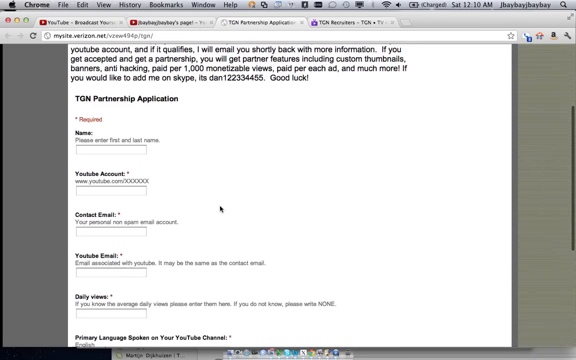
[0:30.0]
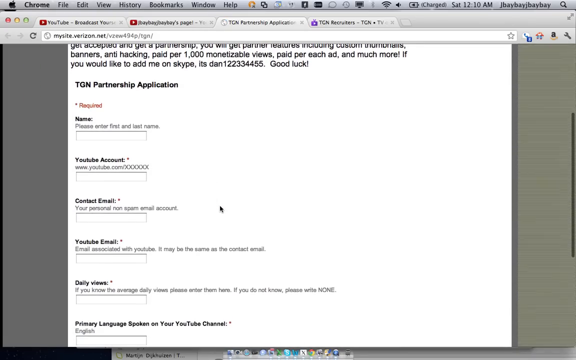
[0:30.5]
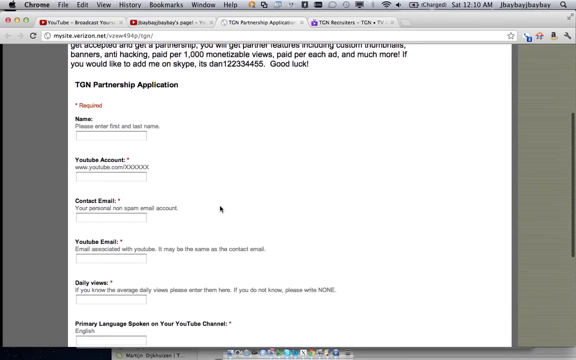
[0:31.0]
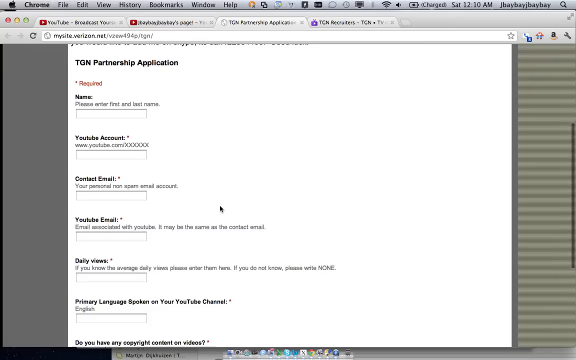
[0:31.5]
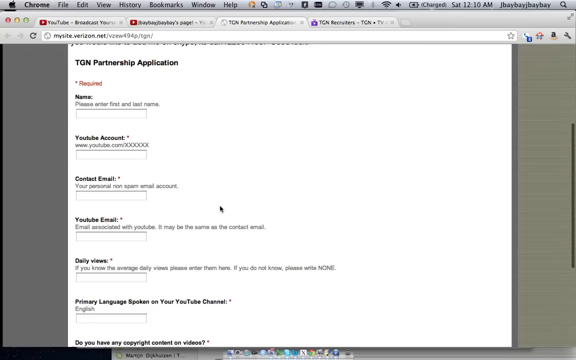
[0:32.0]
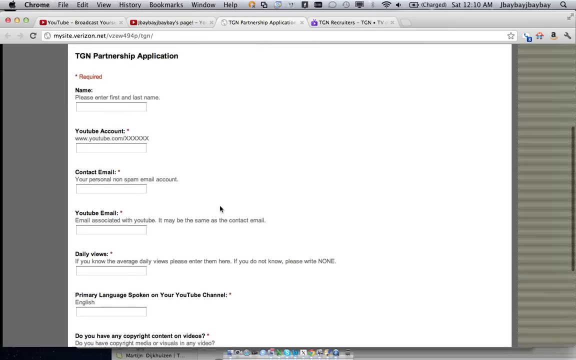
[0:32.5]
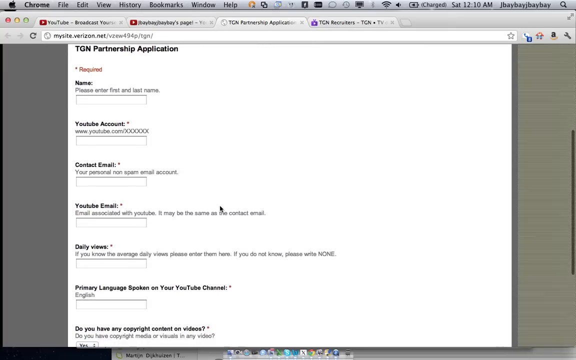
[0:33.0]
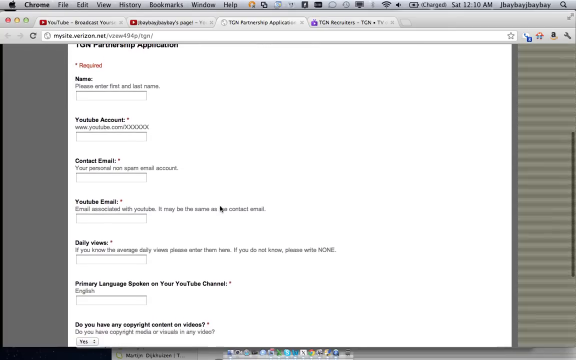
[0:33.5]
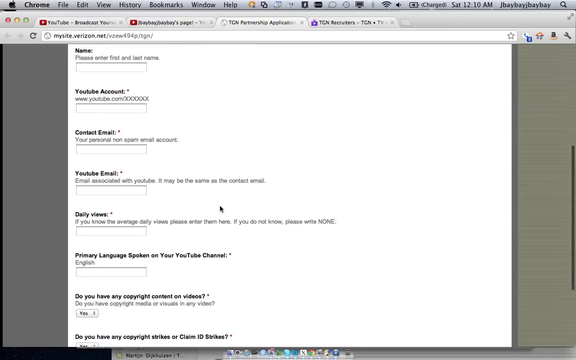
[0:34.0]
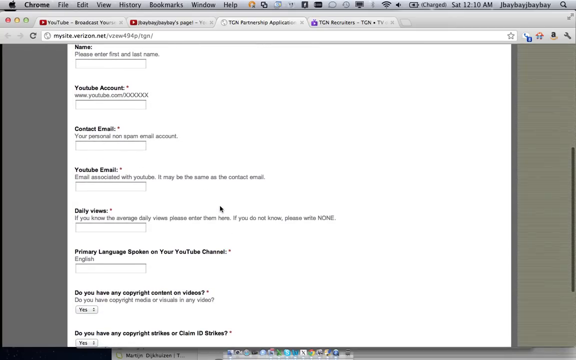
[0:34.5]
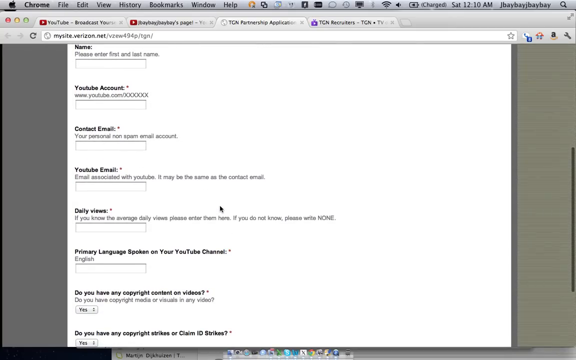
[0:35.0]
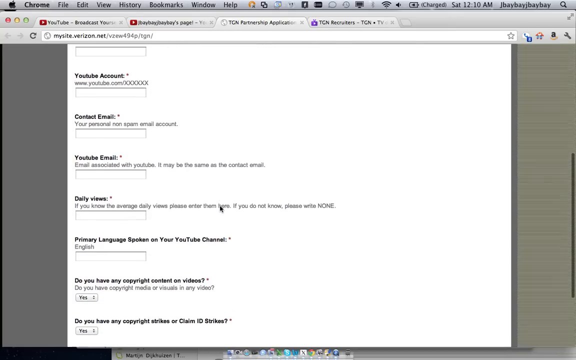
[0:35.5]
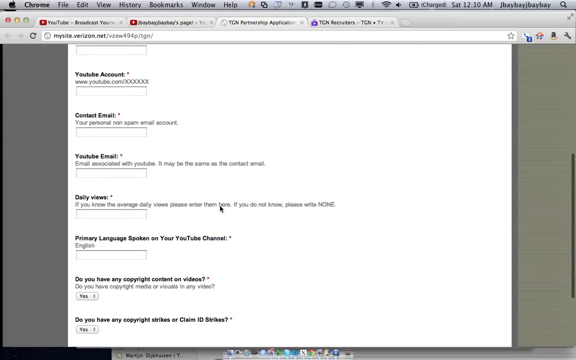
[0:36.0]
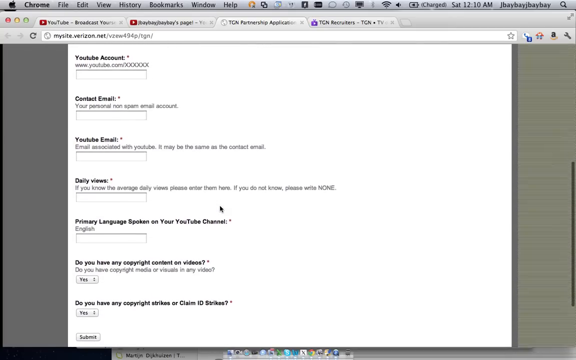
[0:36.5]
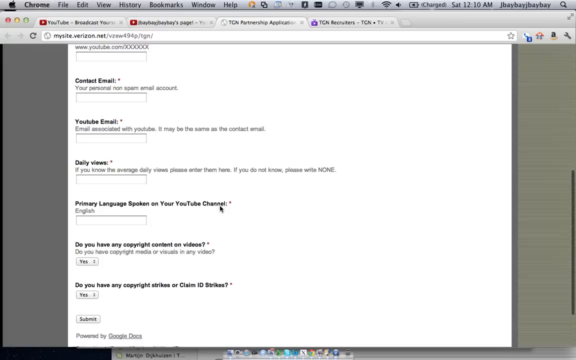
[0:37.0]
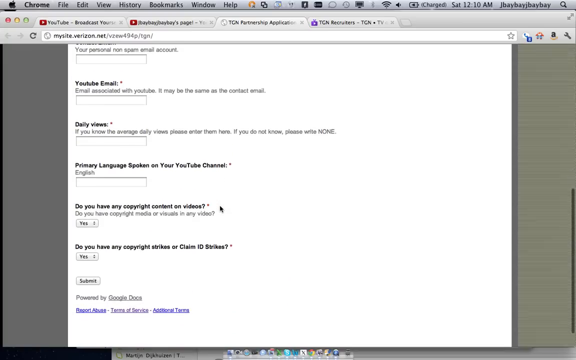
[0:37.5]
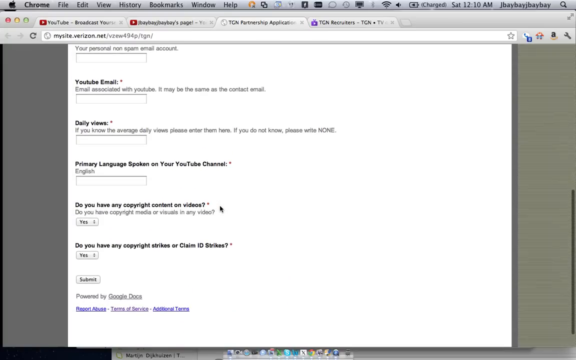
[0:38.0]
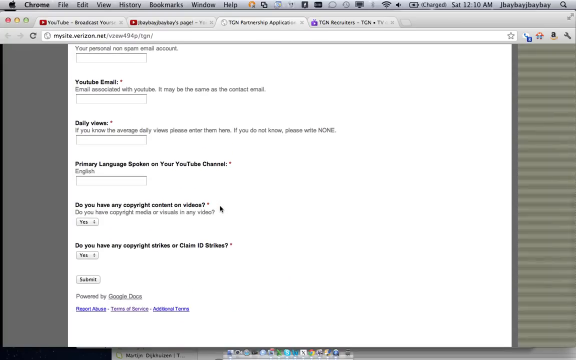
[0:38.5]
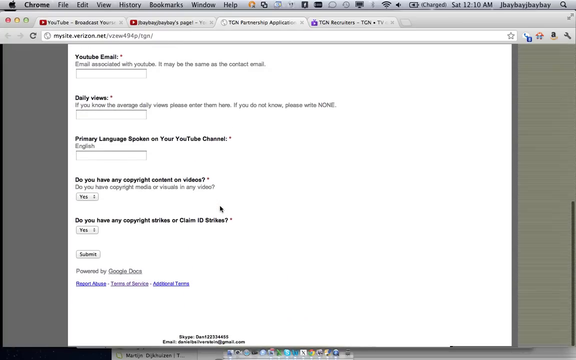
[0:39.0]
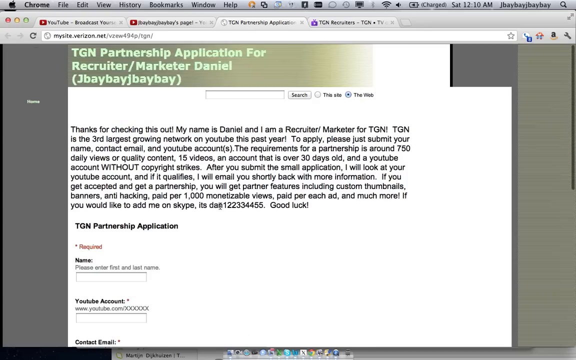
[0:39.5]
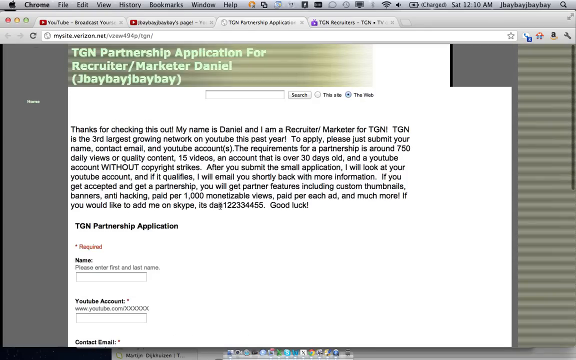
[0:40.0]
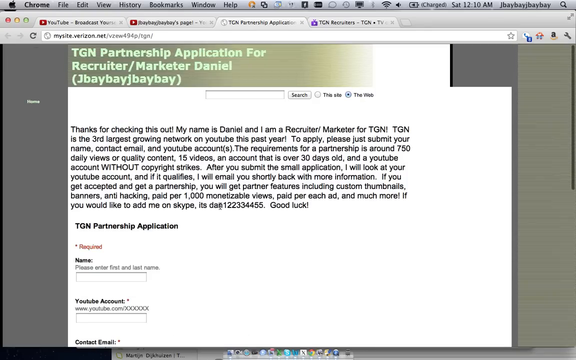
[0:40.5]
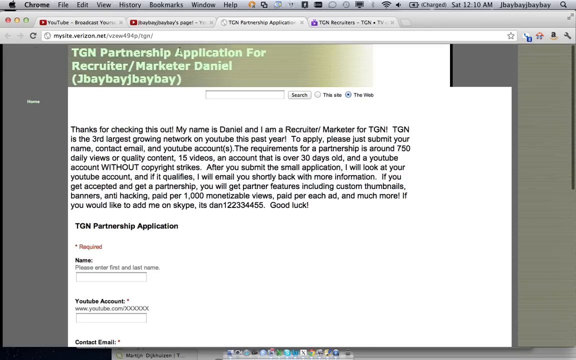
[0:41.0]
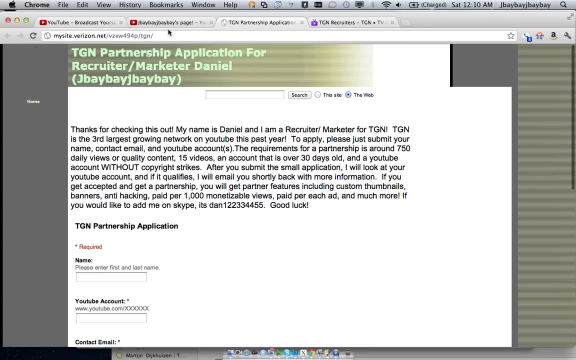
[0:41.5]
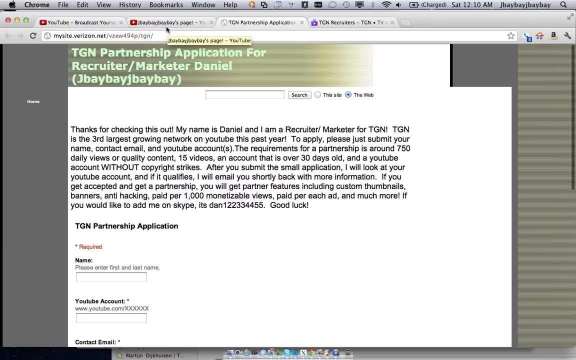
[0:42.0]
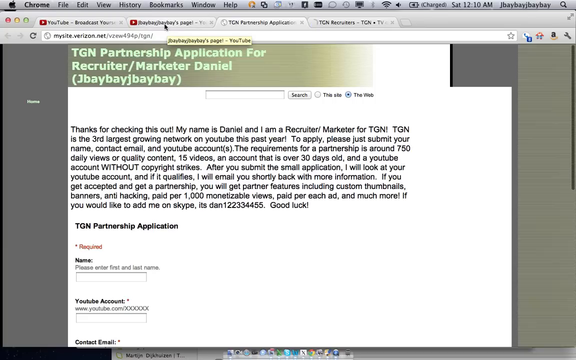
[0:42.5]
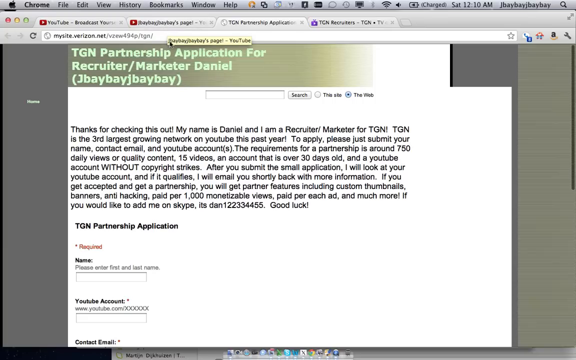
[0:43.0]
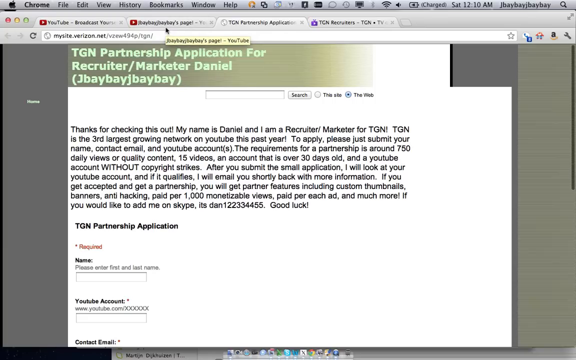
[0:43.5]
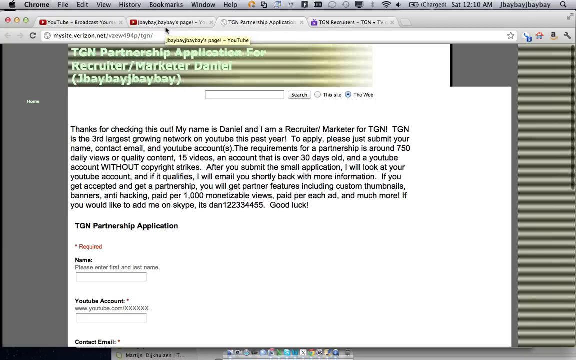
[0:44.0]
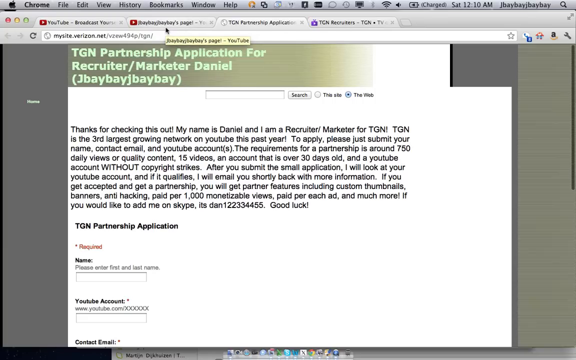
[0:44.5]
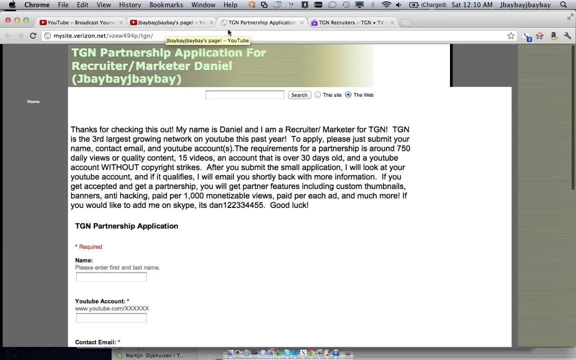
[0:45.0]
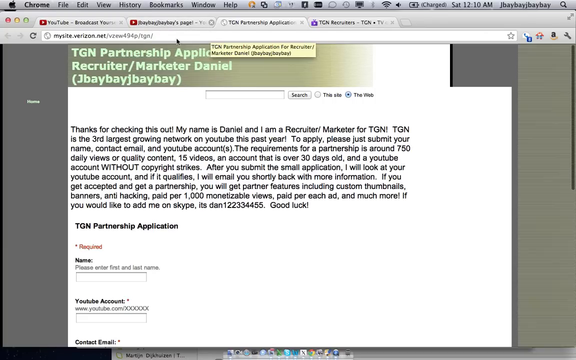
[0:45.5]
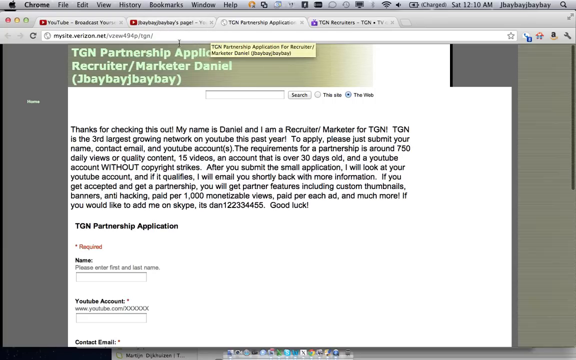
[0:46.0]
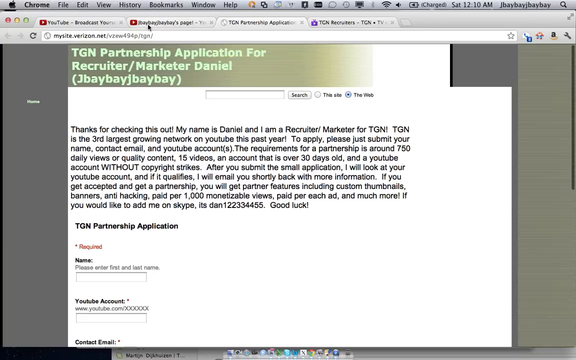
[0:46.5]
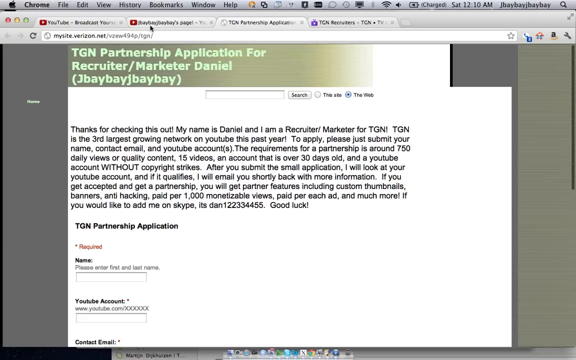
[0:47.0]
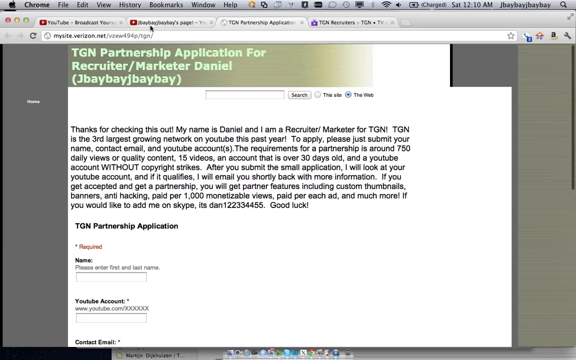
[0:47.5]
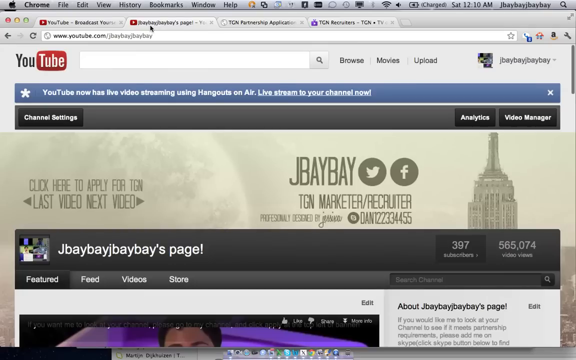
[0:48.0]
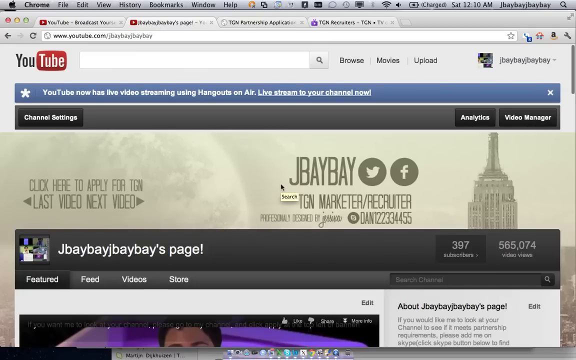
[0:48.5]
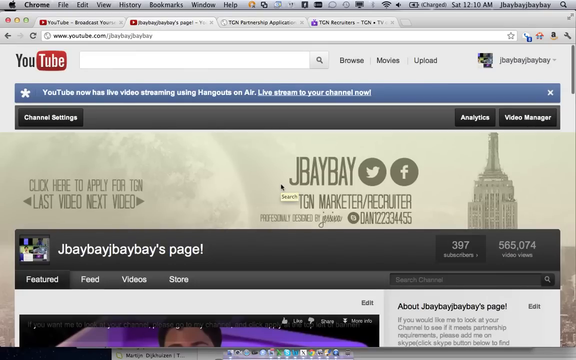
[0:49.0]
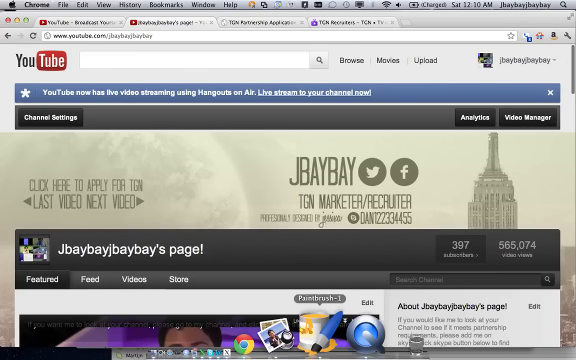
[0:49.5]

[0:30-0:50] The partnership application, a Google Doc, scrolls by. Its fields include name, YouTube account, contact email, YouTube email, daily views, and primary language spoken on your YouTube channel, followed by "Do you have any copyright content on videos?" with an option to select, "do you have any copyright strikes or claim ID strikes?", and a Submit button. The view switches back and forth between the application, the TGN Marketer application page and the Jbebe page. The Jbebe page shows "YouTube now has live video streaming, using Hangouts on air, live stream to your channel now" along with channel settings, analytics and video manager; it appears to be a sort of back end of someone's public YouTube page for showing and creating videos.